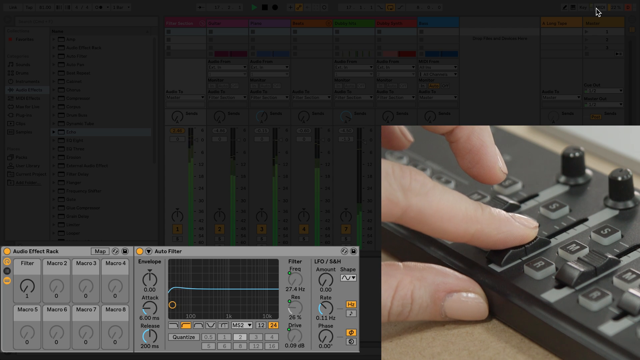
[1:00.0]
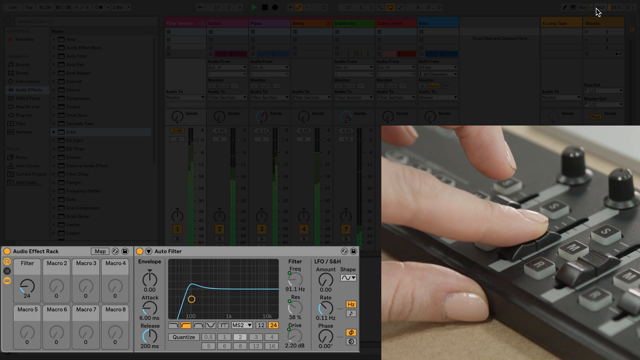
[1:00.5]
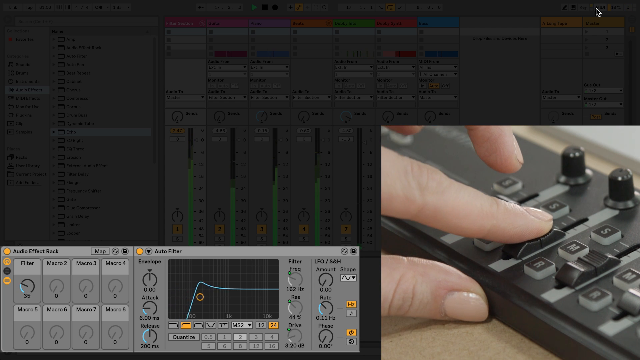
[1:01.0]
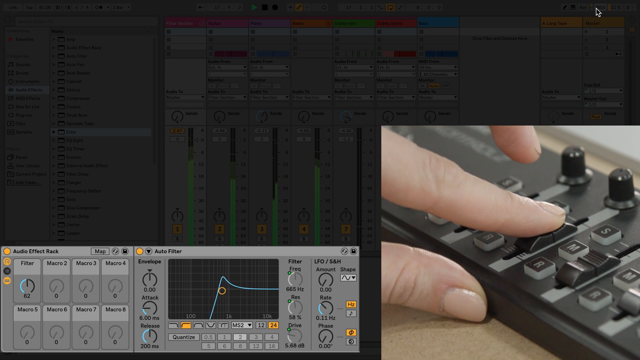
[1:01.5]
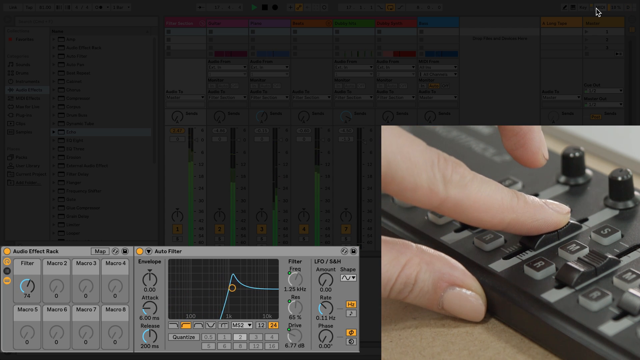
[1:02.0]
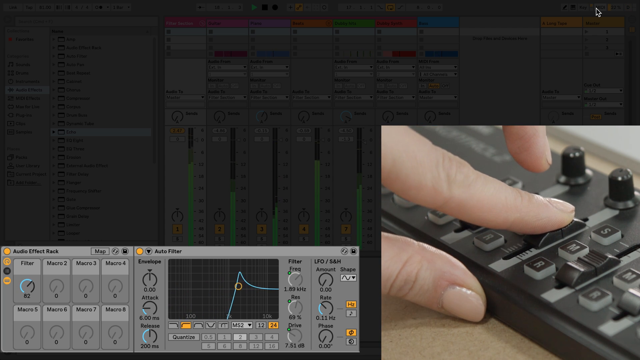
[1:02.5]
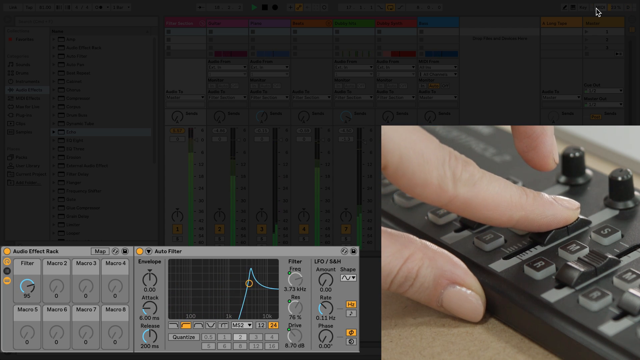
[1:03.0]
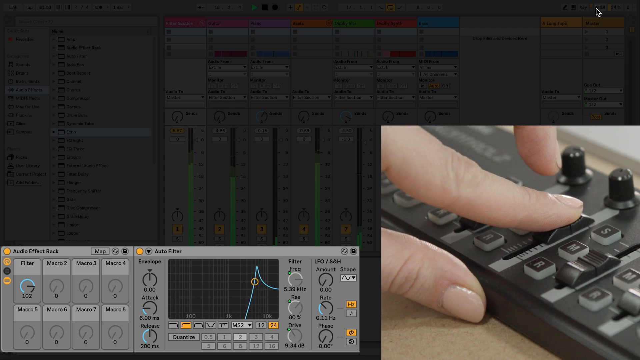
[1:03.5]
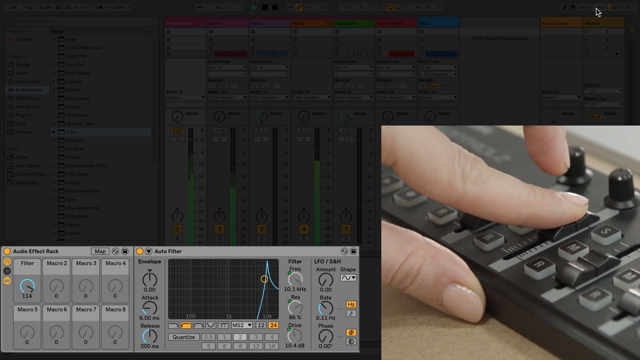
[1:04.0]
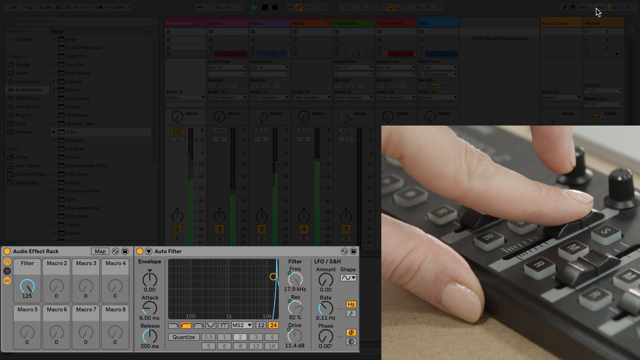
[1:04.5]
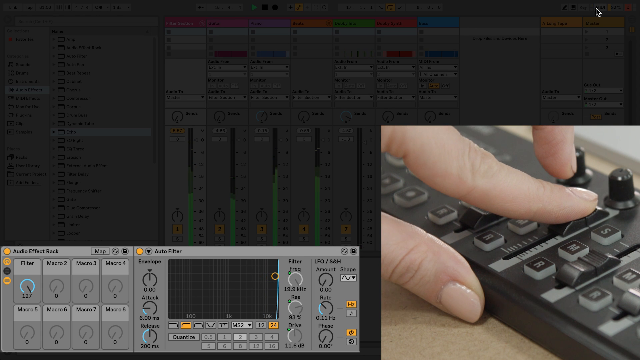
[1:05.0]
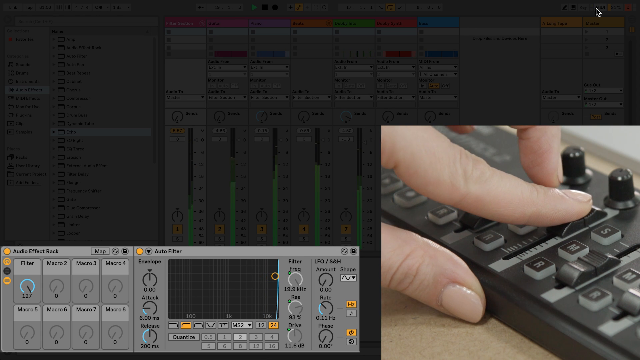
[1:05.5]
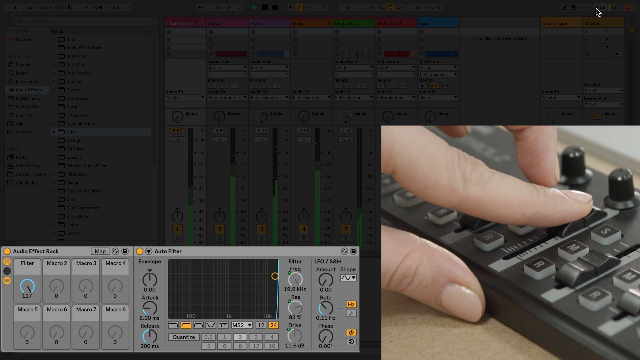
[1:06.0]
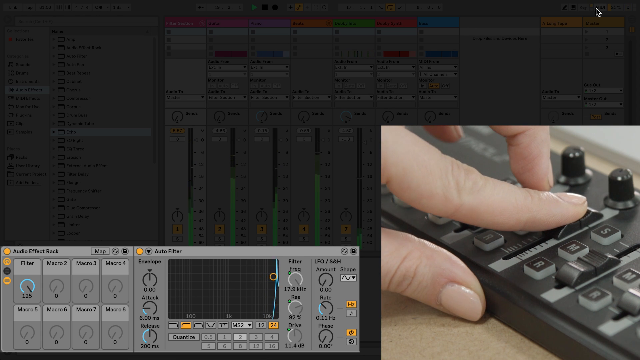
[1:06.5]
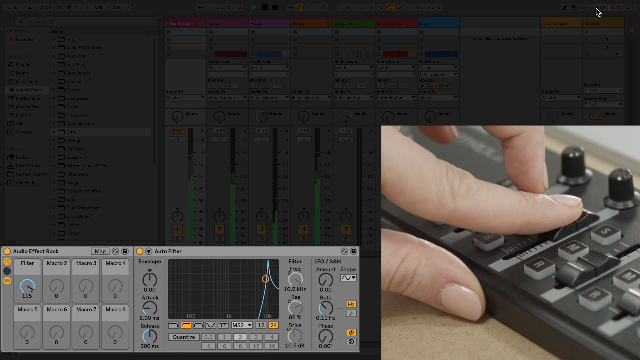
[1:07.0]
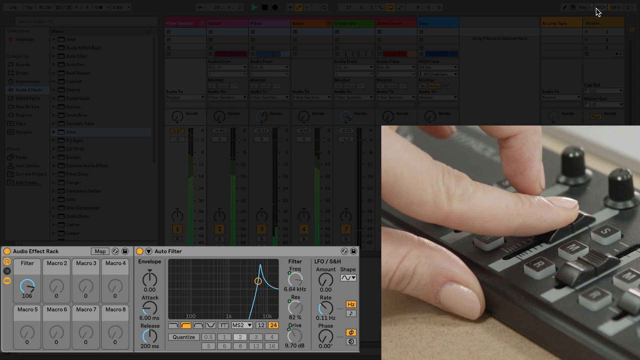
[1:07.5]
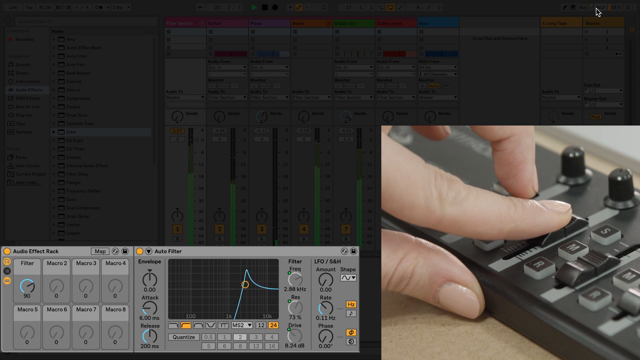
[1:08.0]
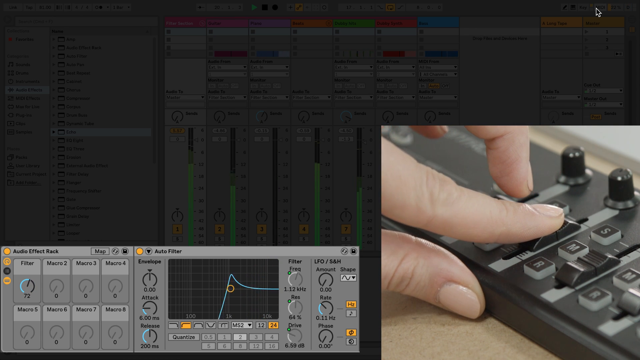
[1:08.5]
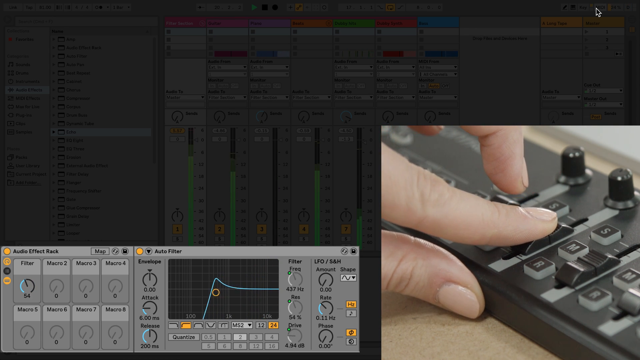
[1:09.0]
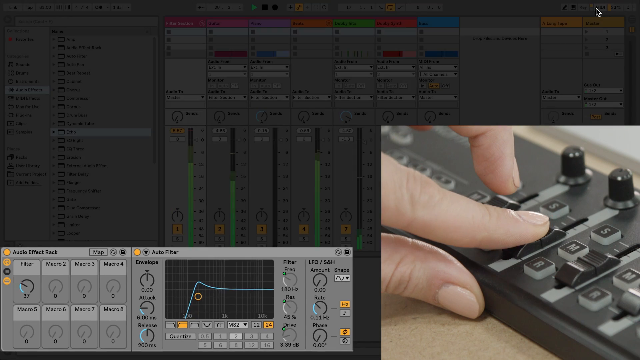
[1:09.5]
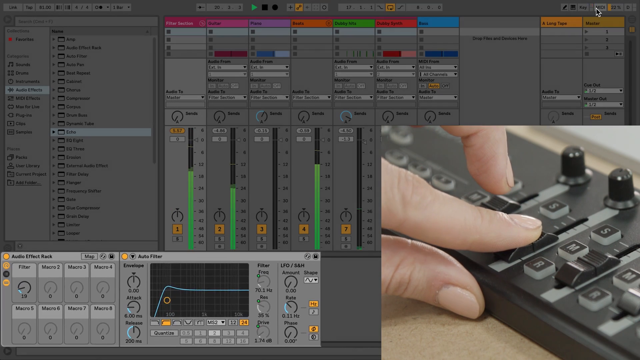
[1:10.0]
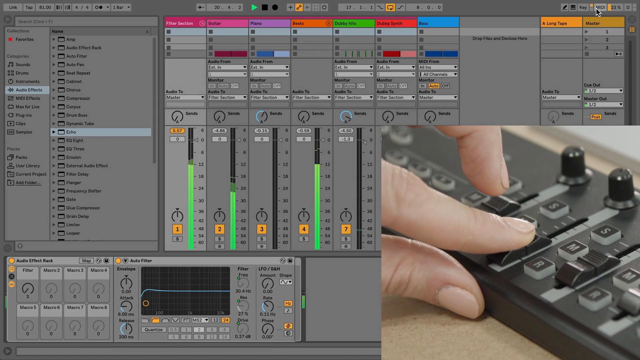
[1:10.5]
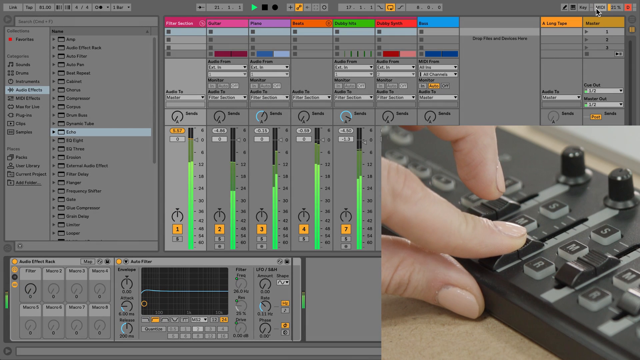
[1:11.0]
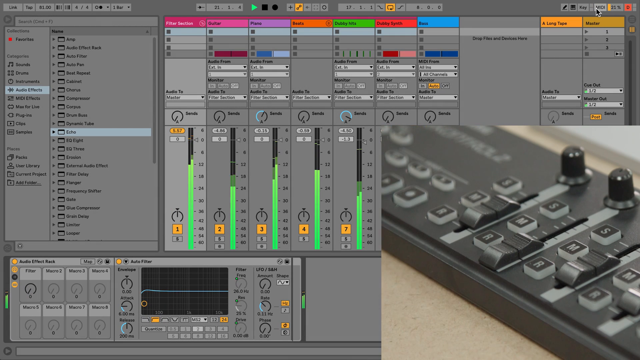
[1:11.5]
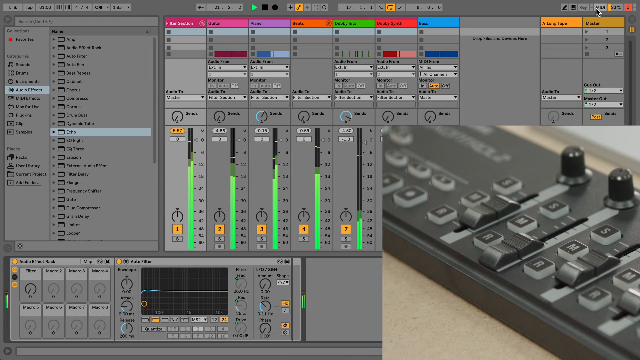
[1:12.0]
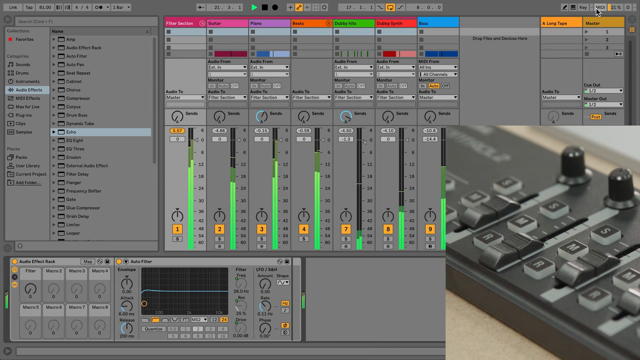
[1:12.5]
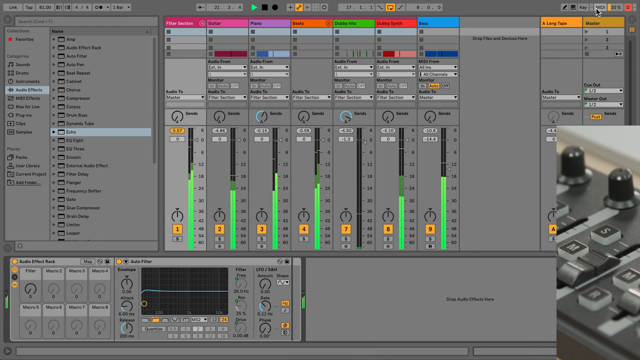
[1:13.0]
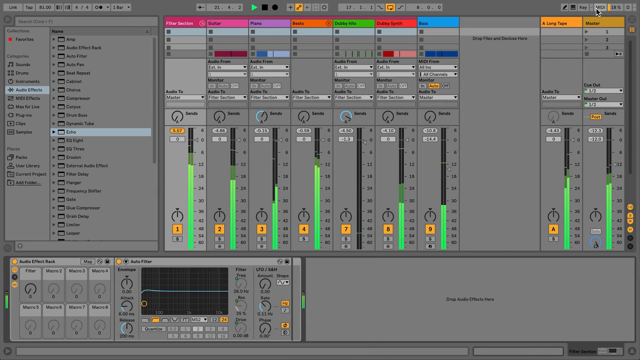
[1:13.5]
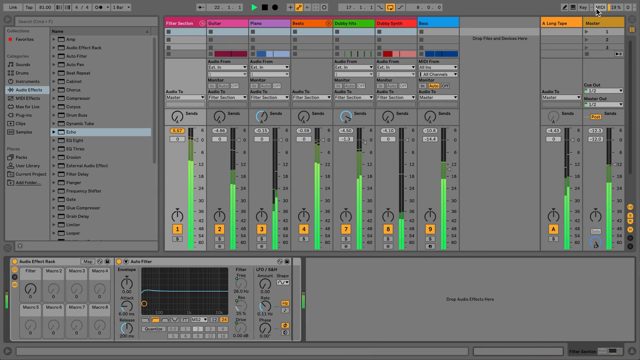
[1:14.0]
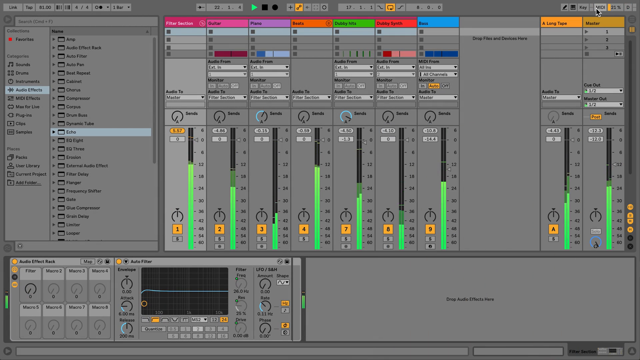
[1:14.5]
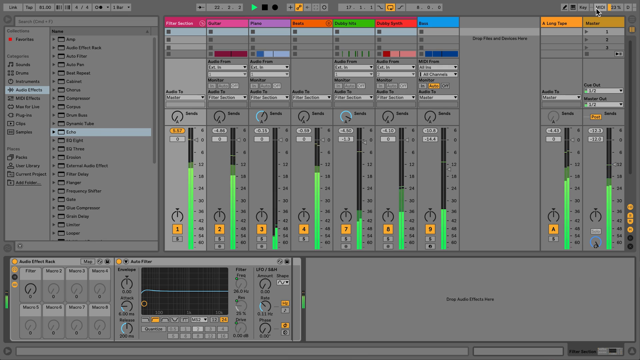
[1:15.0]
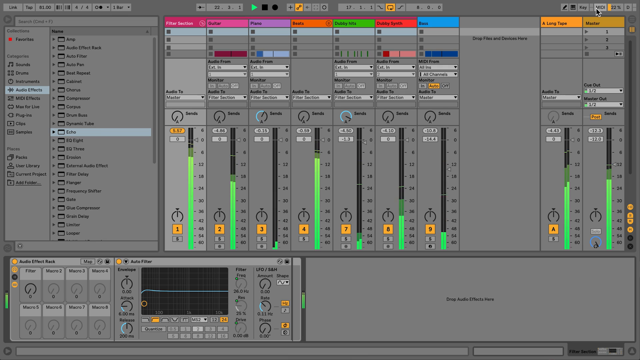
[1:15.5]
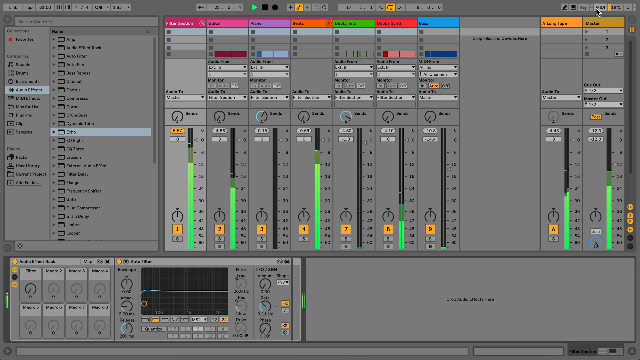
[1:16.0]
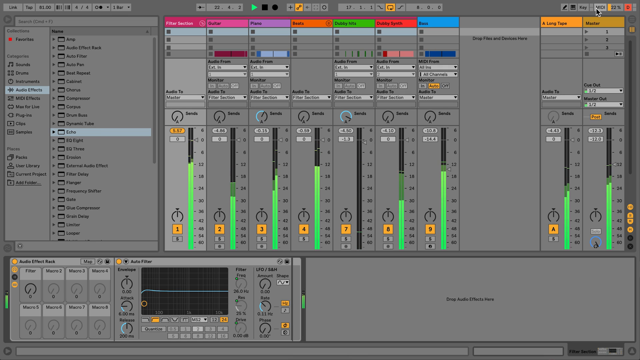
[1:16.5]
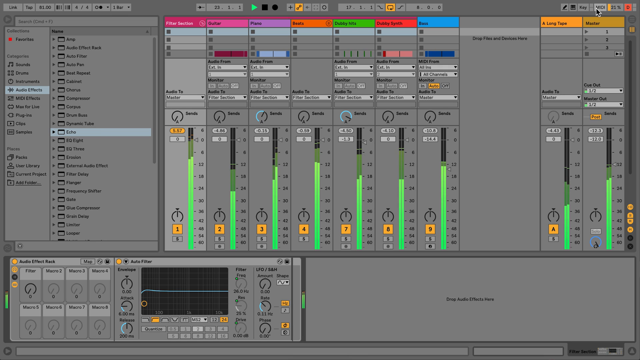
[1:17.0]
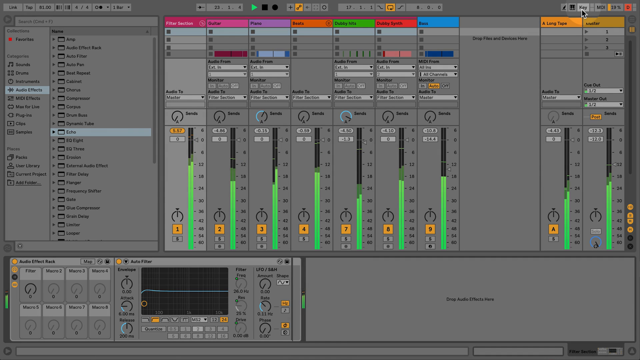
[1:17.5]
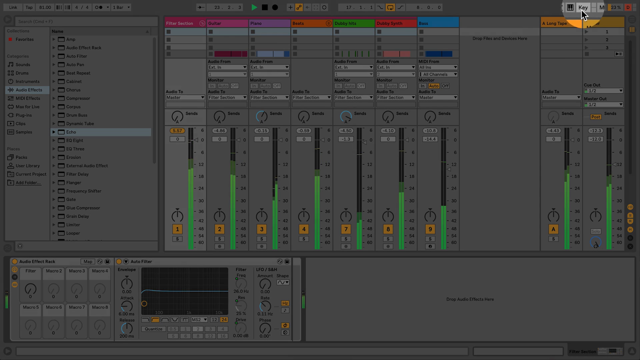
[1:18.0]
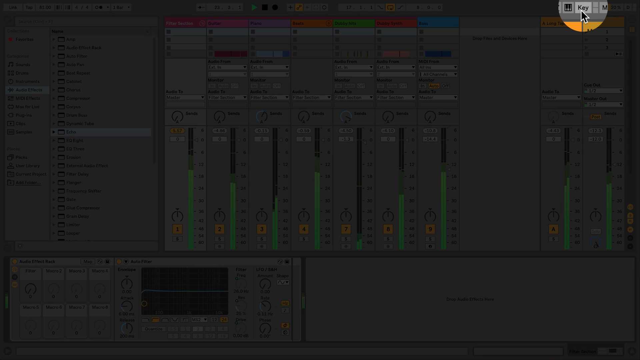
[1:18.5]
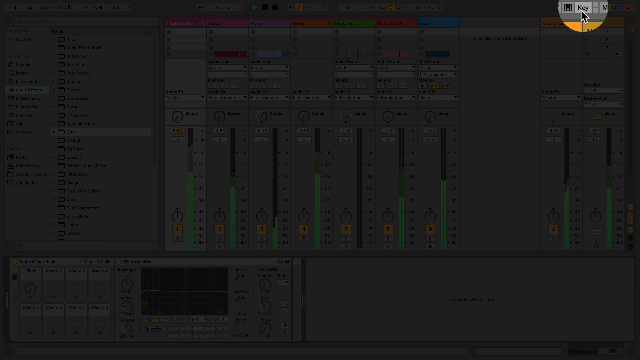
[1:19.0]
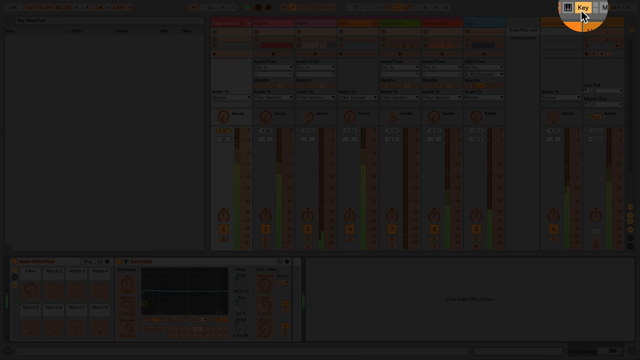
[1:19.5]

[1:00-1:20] The audio mixing application shows all its inputs and effects. On the bottom left of the screen is a window called the Audio Effect Rack, with eight volume or sort of loudness type buttons; seven are grayed out and one, the filter button, is active. Next to it are four little circles, three yellow and one black. Another part of that area has a little graph-looking window with a blue line through it. There are nine additional input options: Envelope, Attack, Release, Frequency, Res, Drive, Amount, Rate, and Phase. On the right is a MIDI machine with multiple buttons, dials and levers. A left forefinger rests on one of the levers, the thumb is pressed against the bottom of the machine, and two fingers hover over the top of it. As the forefinger pushes the lever, the blue line in the little screen to the left changes, going from sort of straight to horizontal to vertical and back again. The video then goes to a wide shot of the mixing board.